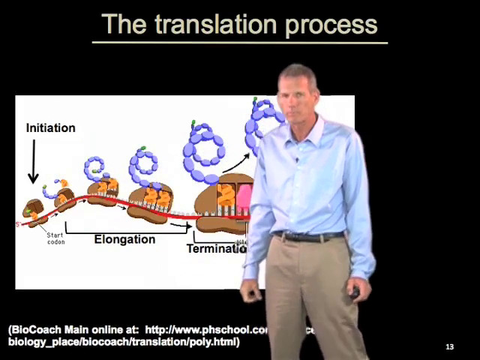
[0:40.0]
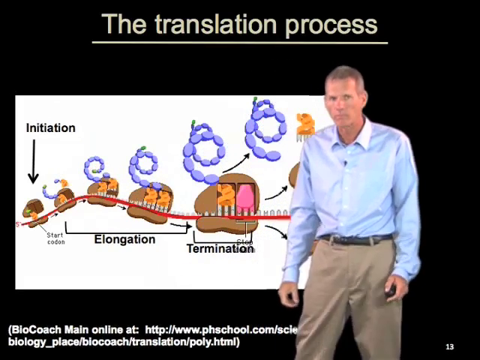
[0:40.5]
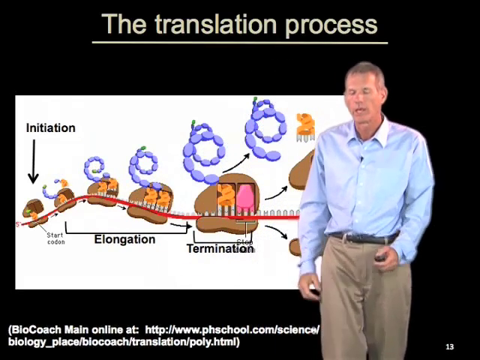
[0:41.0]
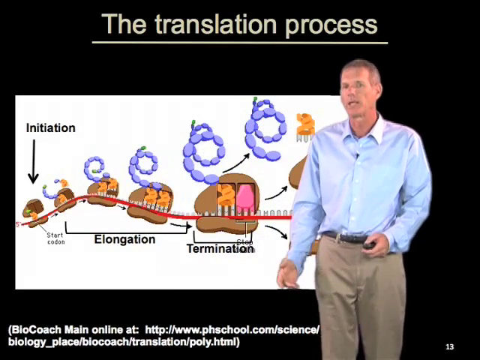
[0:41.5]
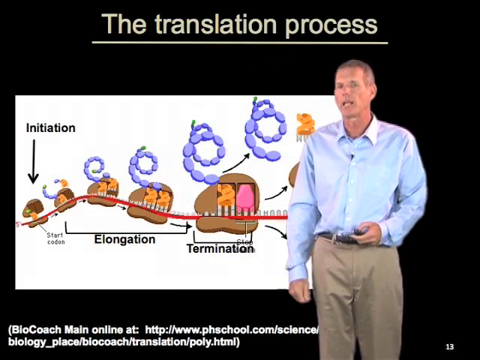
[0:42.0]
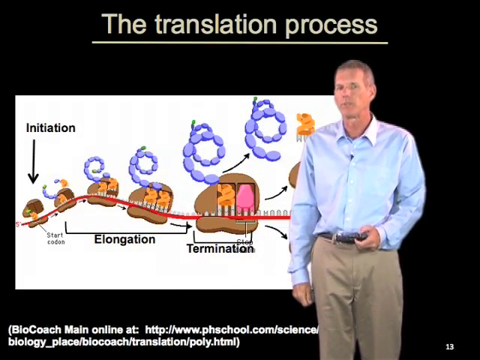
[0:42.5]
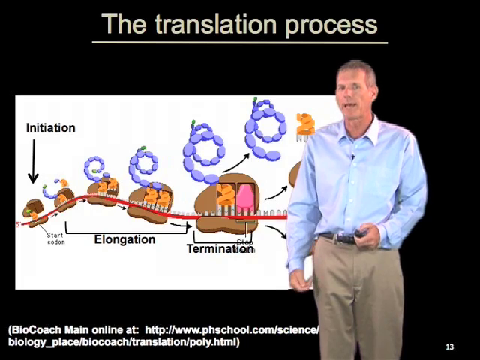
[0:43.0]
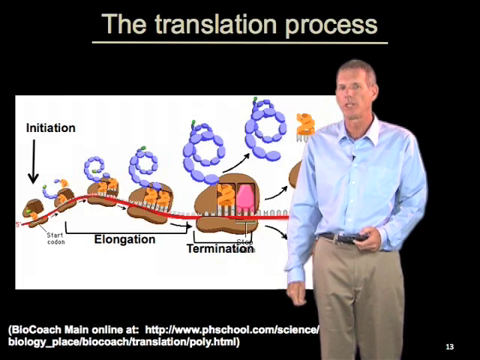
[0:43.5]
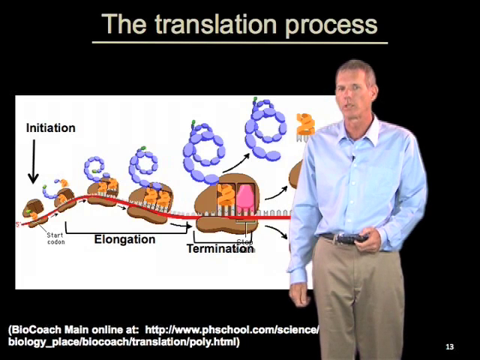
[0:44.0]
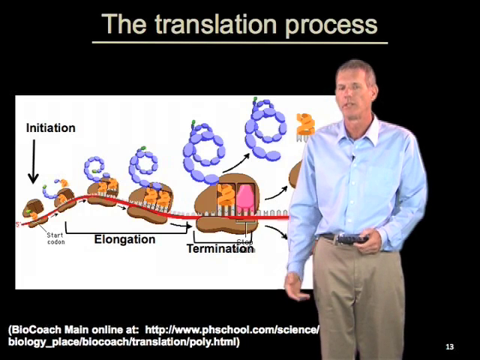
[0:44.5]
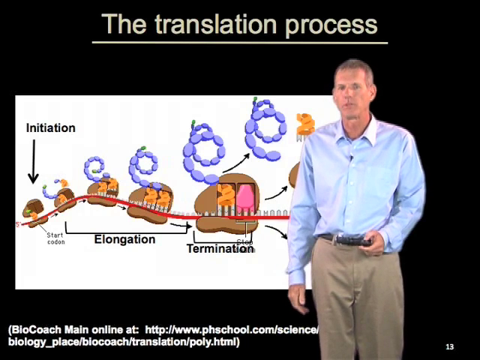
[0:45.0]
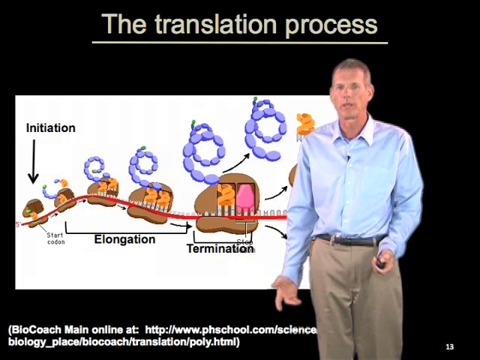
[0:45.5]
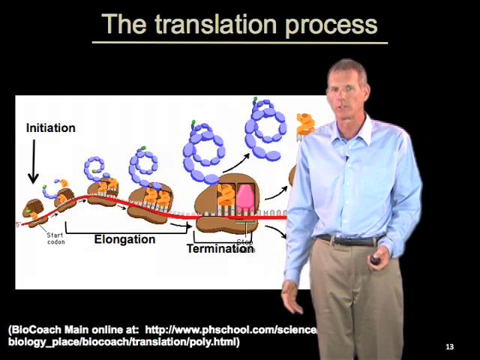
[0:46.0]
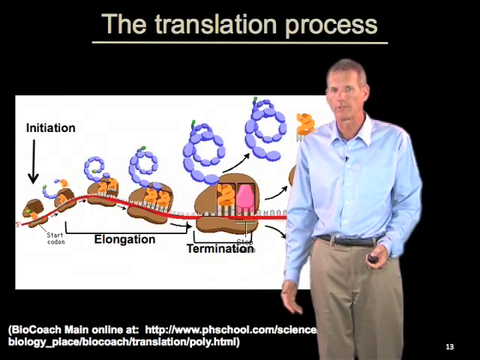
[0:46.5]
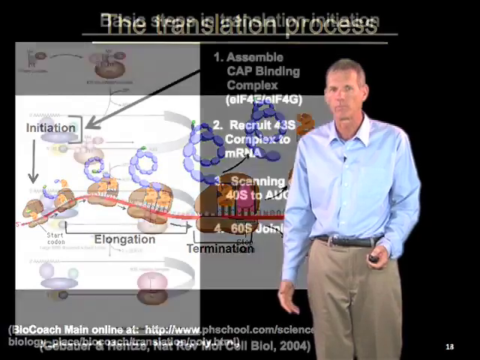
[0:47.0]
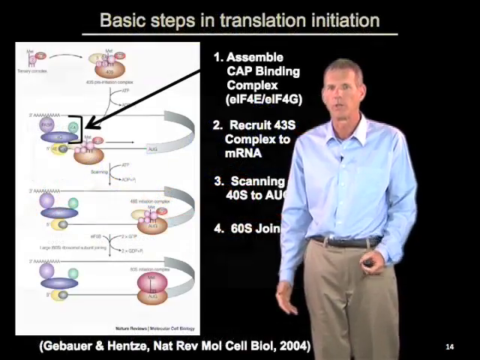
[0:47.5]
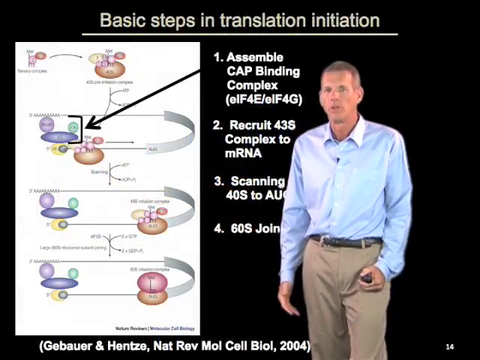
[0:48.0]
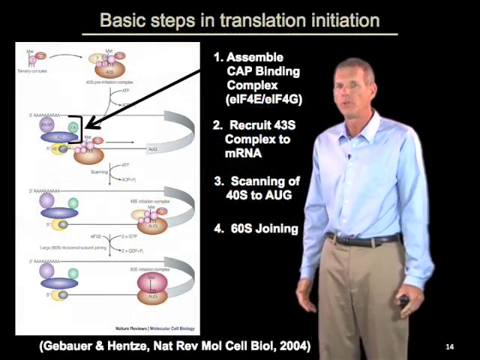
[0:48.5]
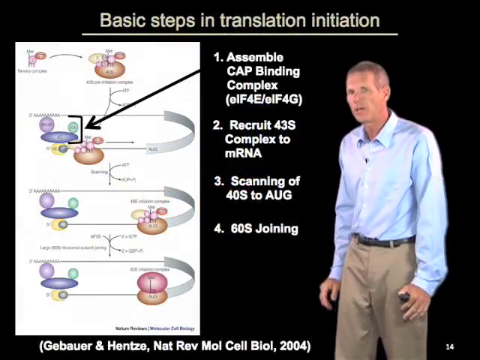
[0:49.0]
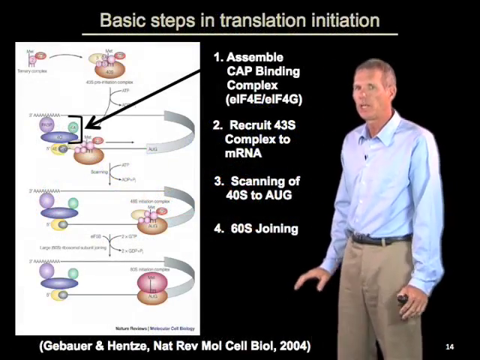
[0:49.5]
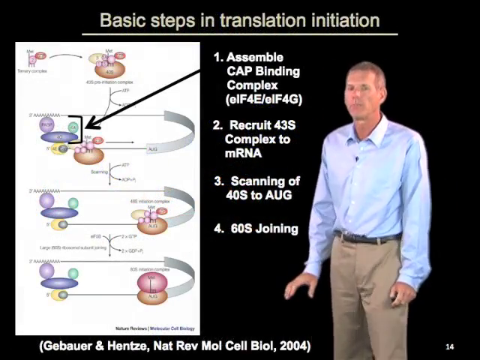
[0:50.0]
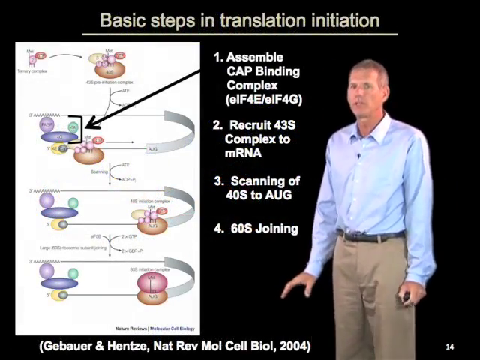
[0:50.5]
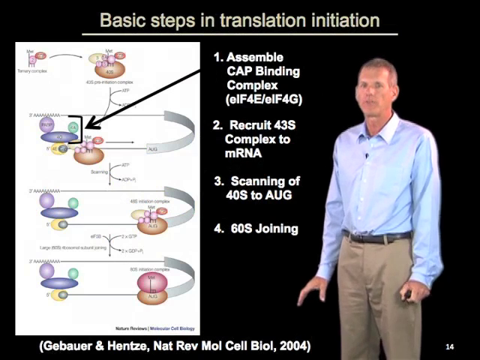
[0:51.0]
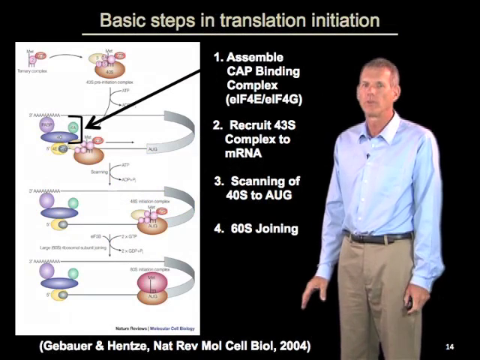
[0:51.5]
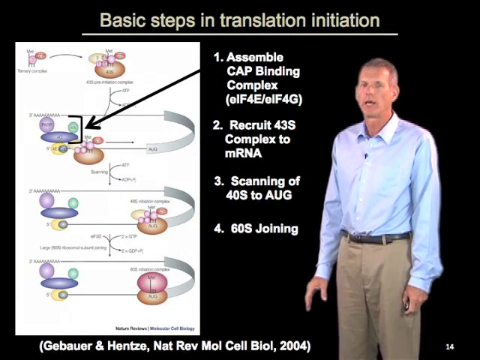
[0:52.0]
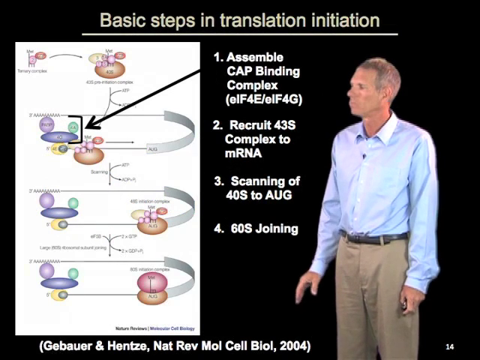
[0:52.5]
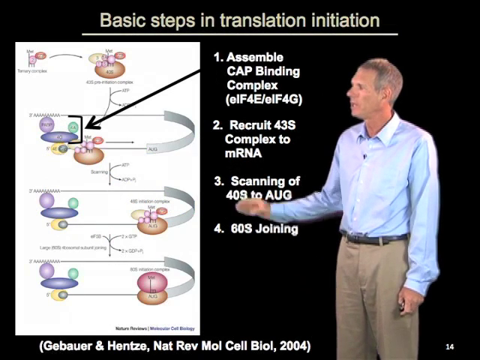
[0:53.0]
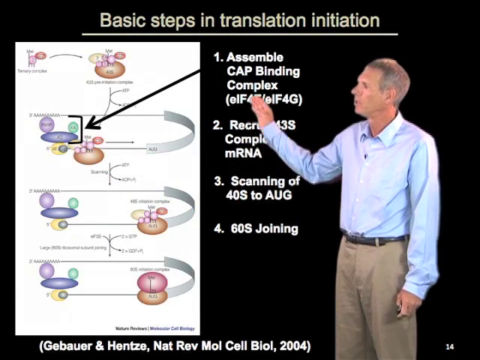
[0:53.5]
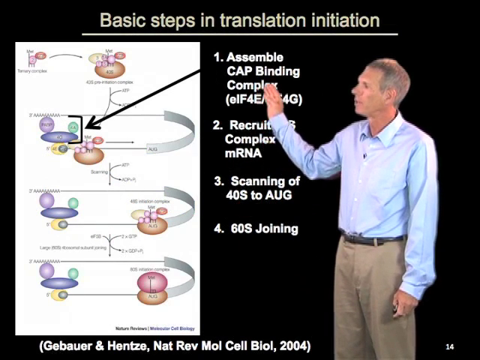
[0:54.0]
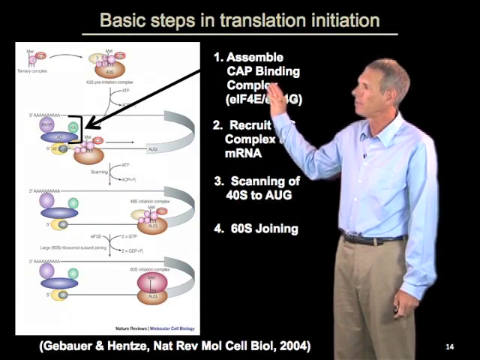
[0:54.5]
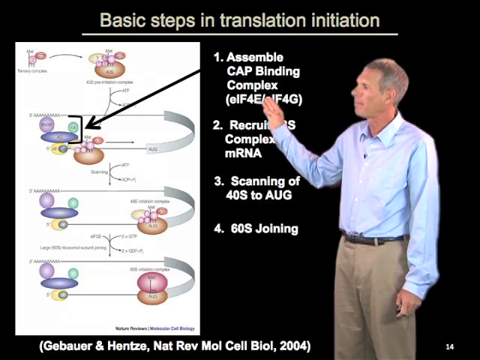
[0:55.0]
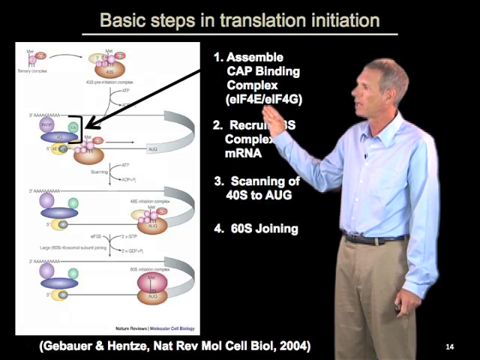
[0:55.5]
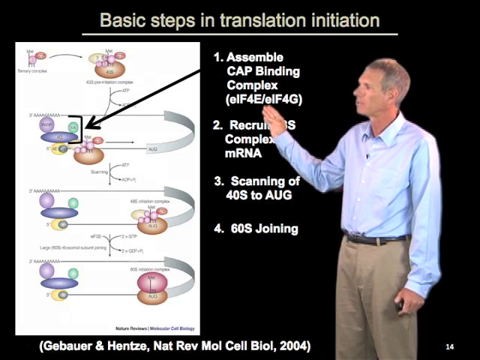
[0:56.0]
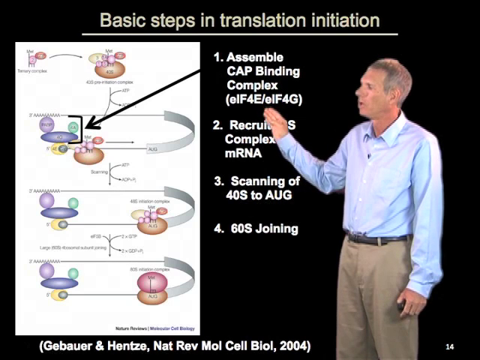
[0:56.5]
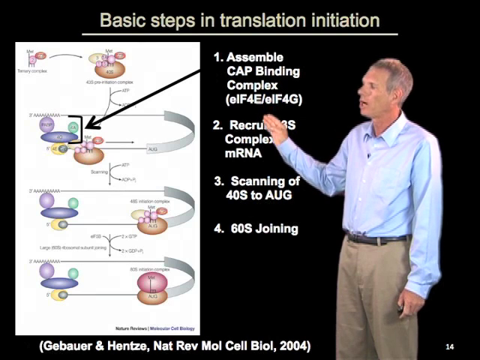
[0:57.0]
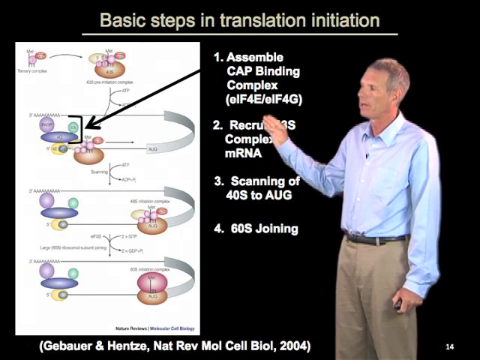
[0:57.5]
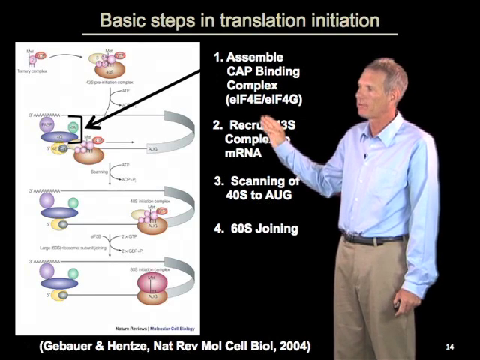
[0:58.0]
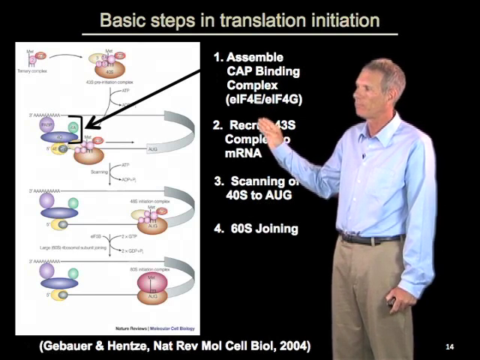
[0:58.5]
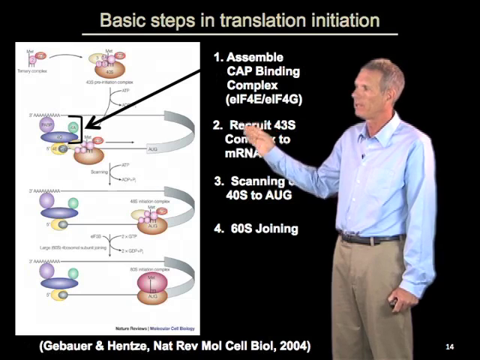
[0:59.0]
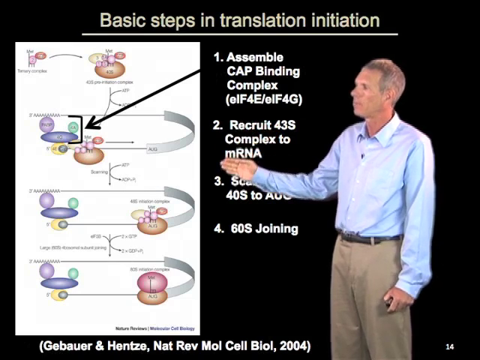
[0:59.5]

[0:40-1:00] The man, apparently the bio coach, stands at the edge of a picture diagram of the translation process that shows step after step: initiation, then elongation, involving brown, orange, purple and a little green, and then termination, where the purple looks like purple sausage links. He wears khaki pants and a light long-sleeved shirt, holds a clicker in his left hand and in a way points with his right hand. A chart of the basic steps in translation initiation then appears: step one, "assemble cap binding complex"; then "recruit 43S complex to mRNA"; the third step, "scanning of 40S to AUG"; and the fourth step, "60S joining."